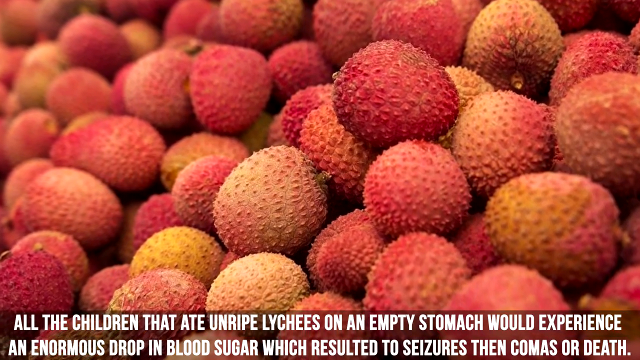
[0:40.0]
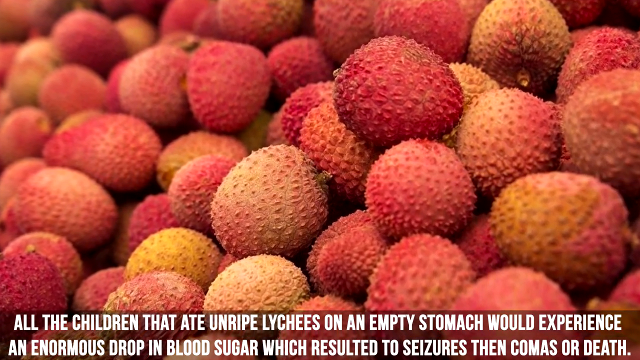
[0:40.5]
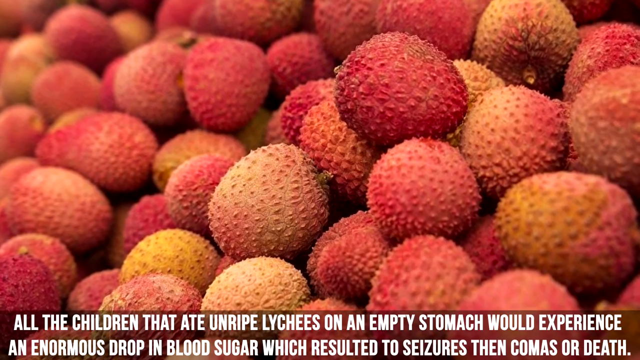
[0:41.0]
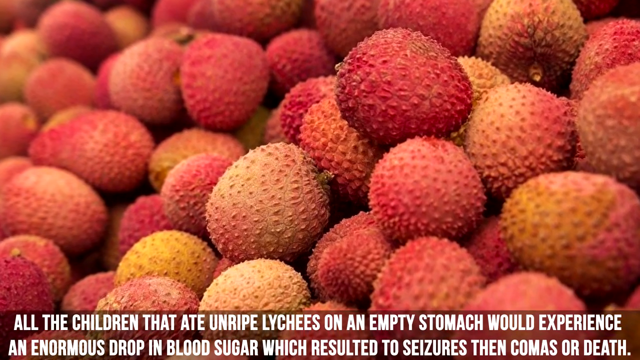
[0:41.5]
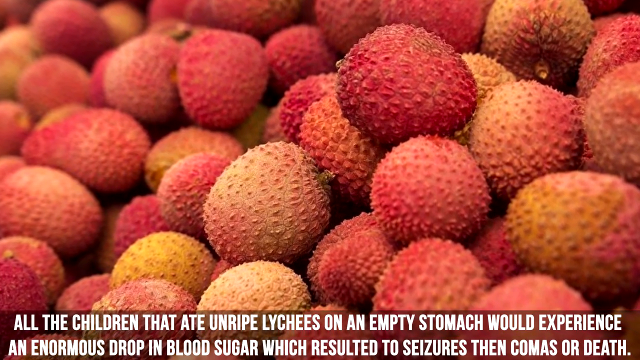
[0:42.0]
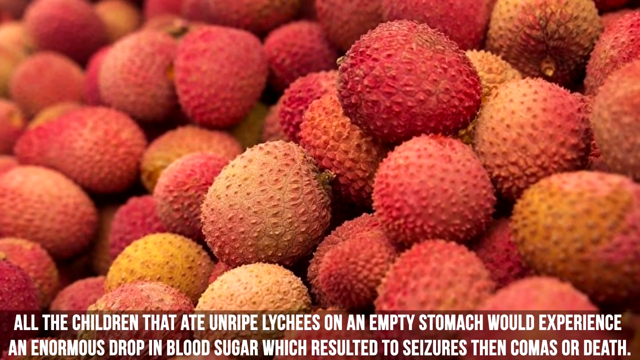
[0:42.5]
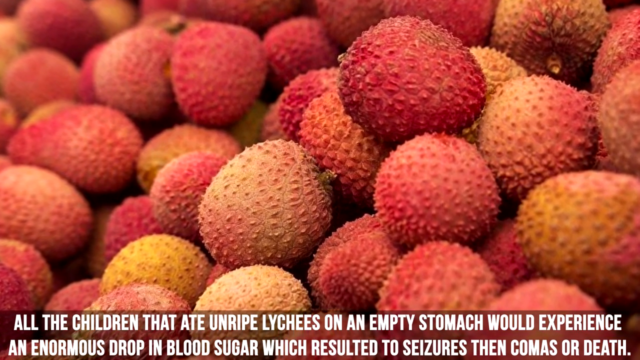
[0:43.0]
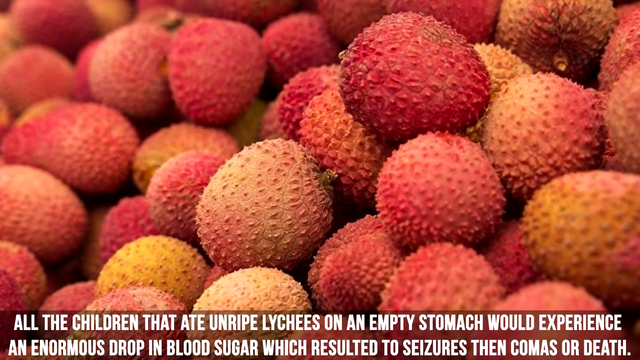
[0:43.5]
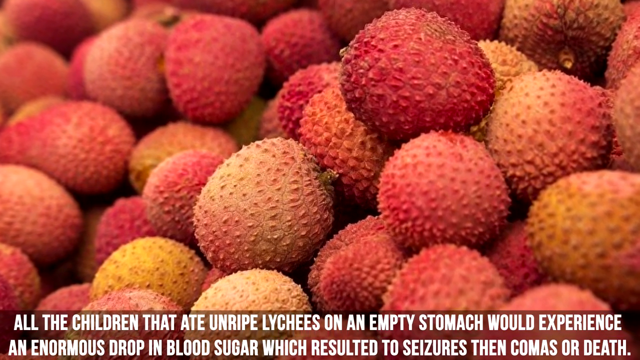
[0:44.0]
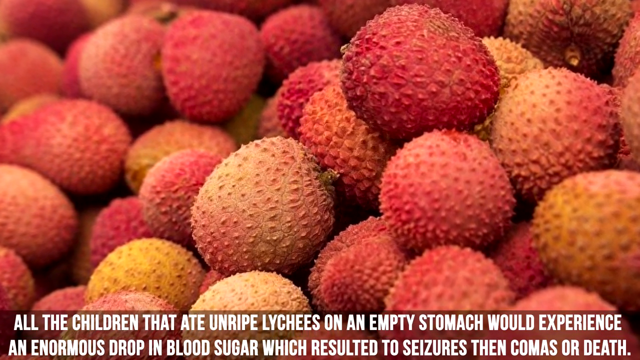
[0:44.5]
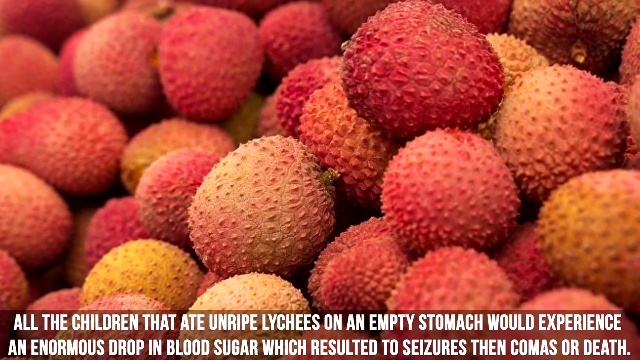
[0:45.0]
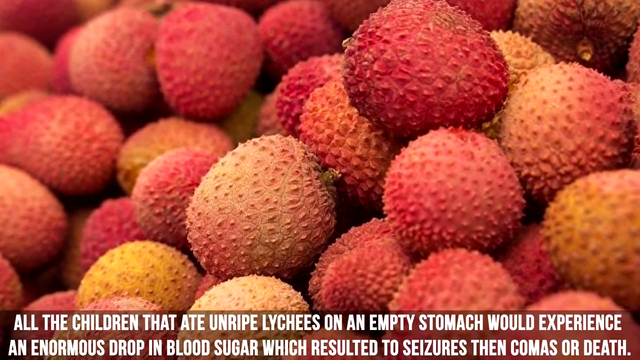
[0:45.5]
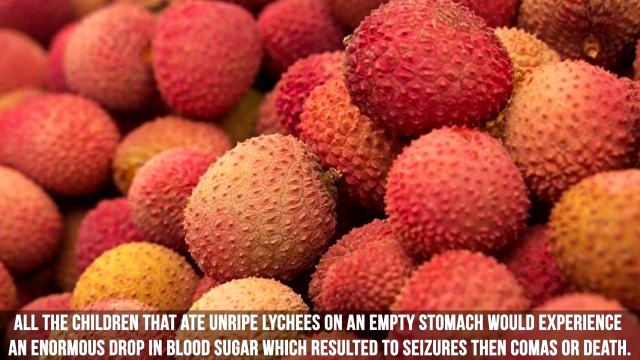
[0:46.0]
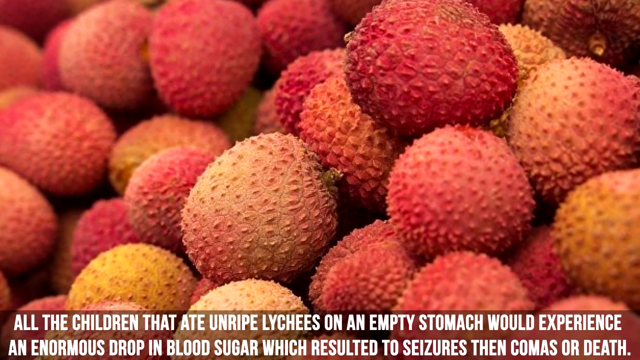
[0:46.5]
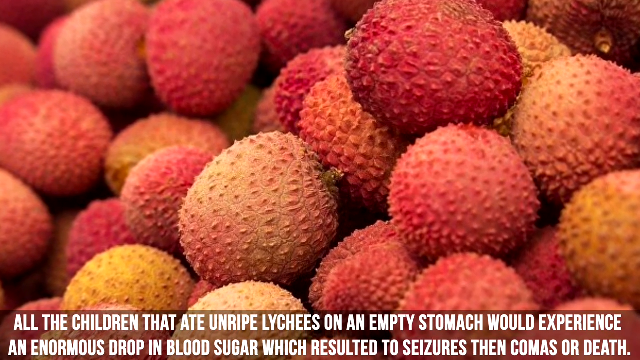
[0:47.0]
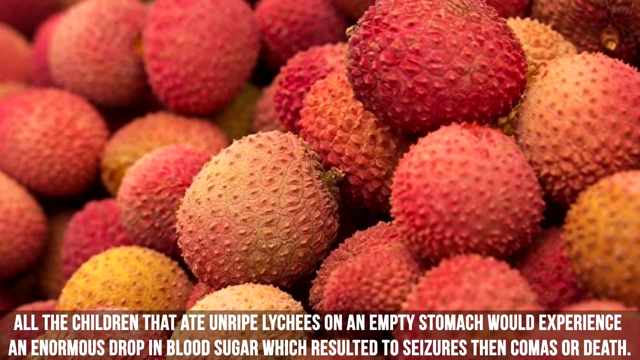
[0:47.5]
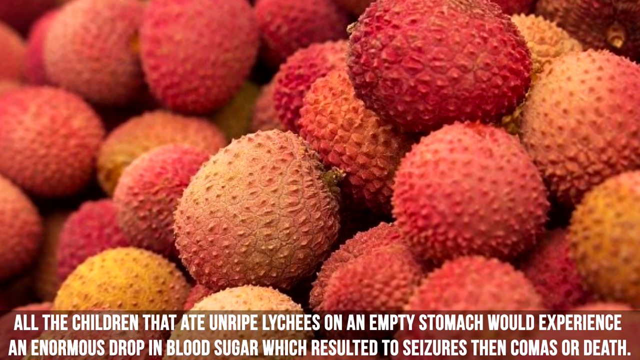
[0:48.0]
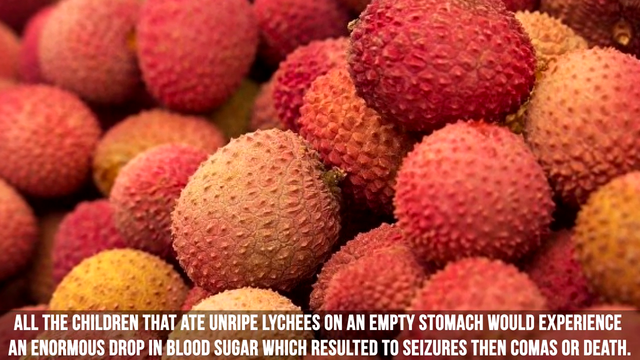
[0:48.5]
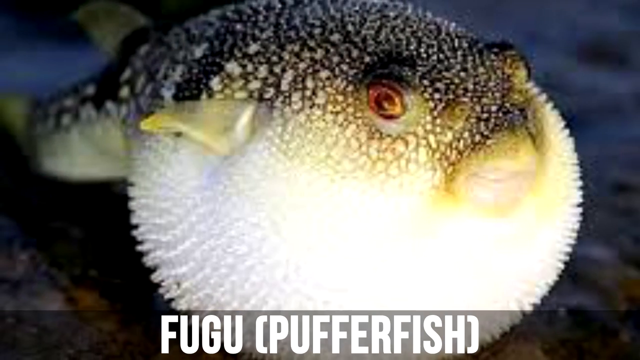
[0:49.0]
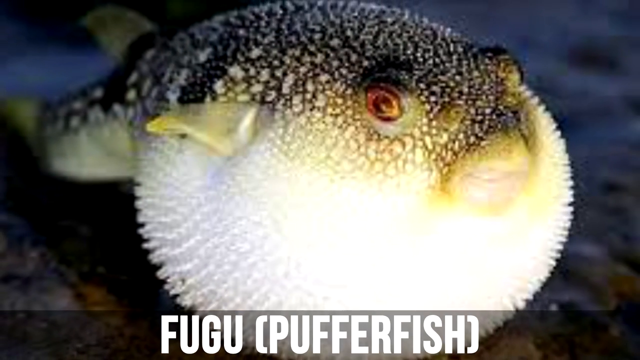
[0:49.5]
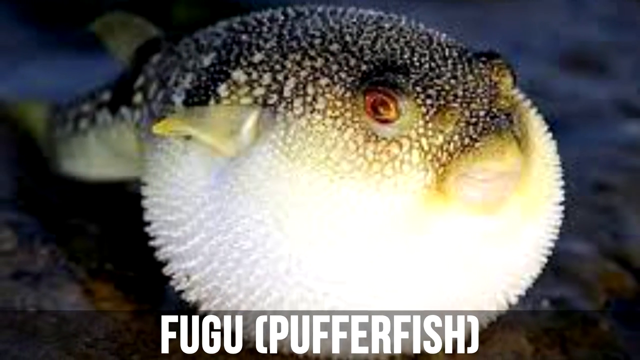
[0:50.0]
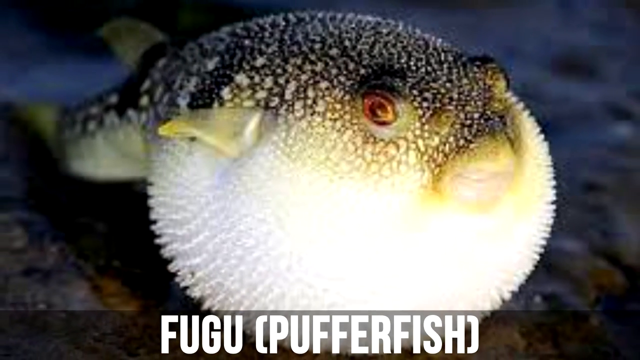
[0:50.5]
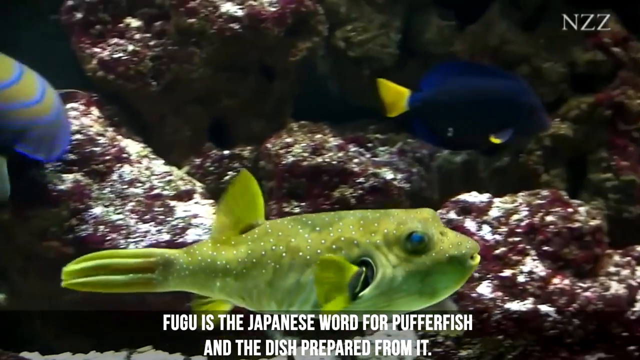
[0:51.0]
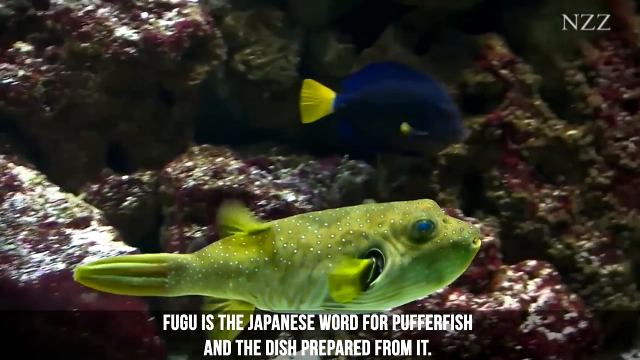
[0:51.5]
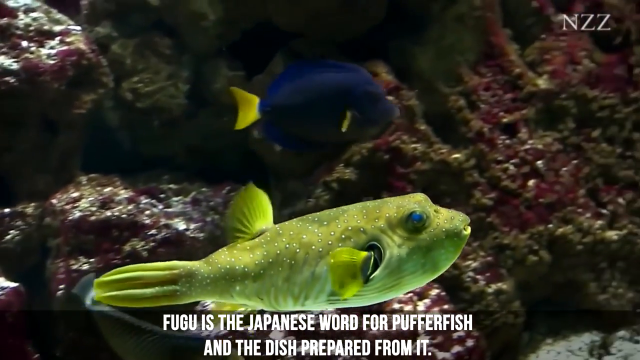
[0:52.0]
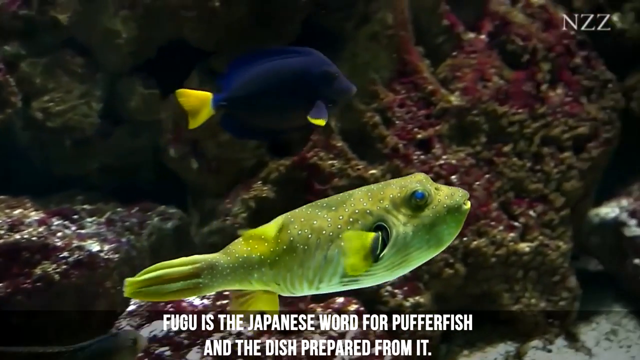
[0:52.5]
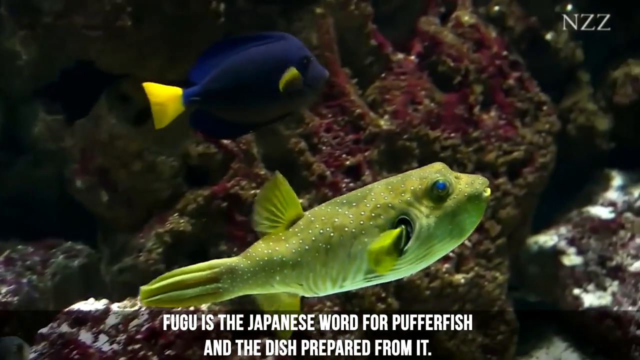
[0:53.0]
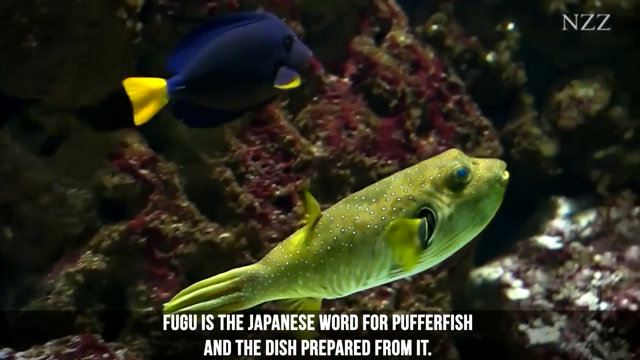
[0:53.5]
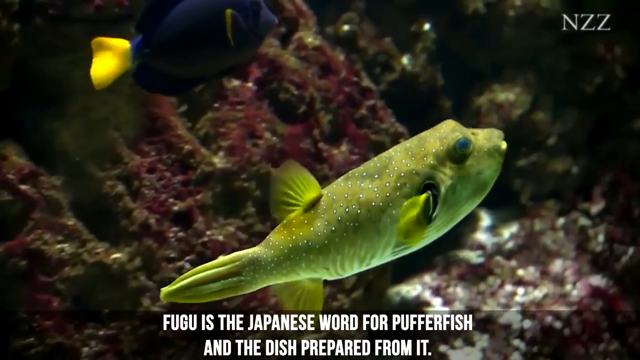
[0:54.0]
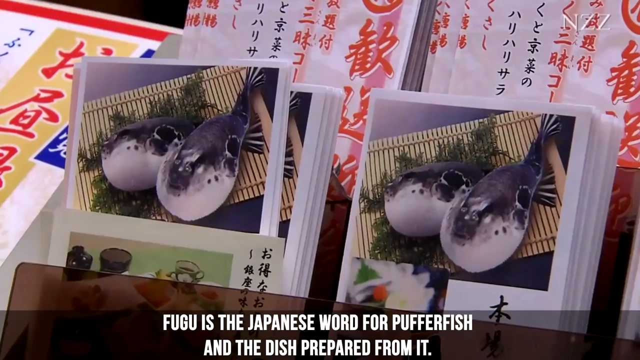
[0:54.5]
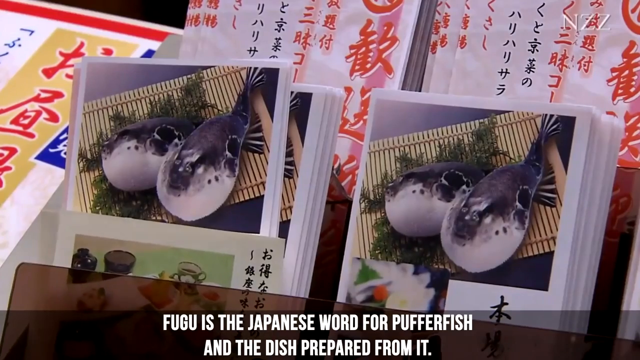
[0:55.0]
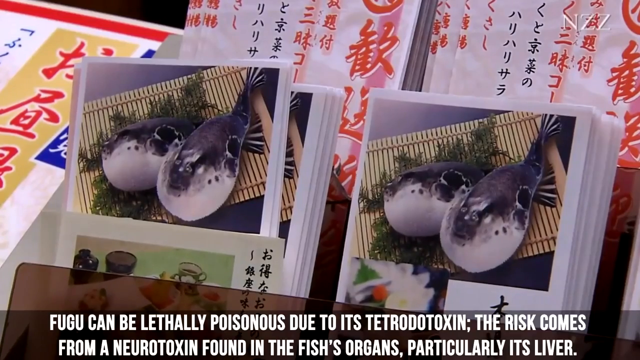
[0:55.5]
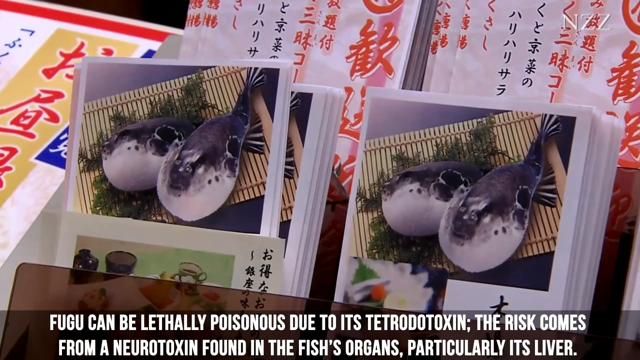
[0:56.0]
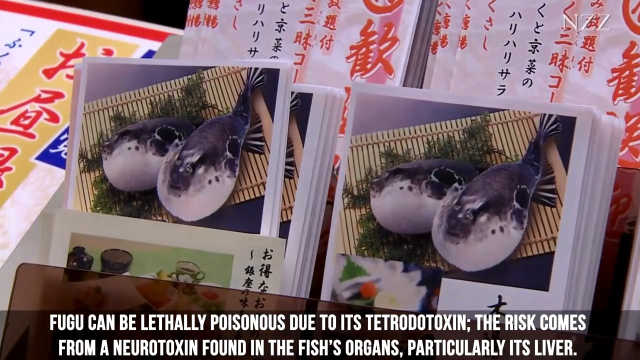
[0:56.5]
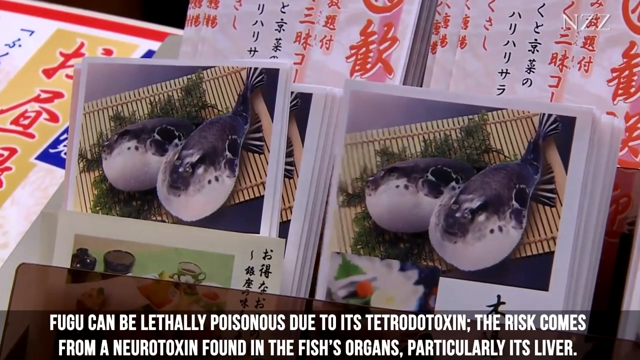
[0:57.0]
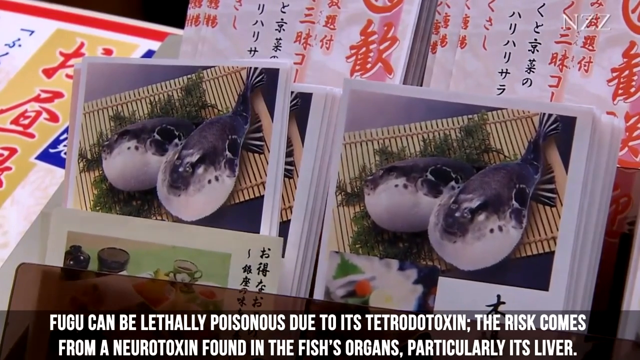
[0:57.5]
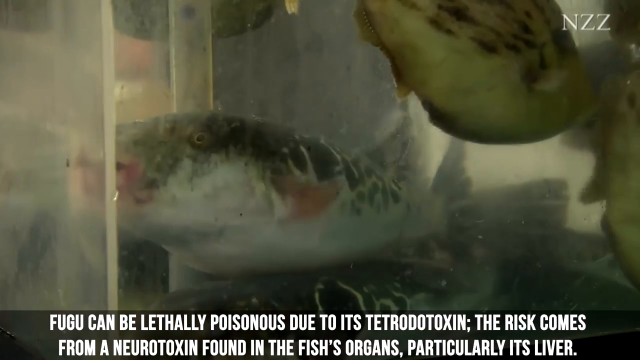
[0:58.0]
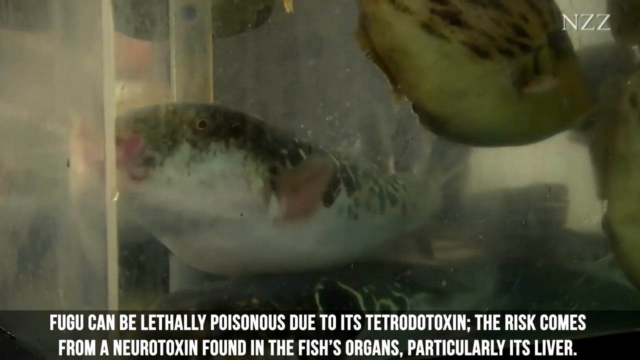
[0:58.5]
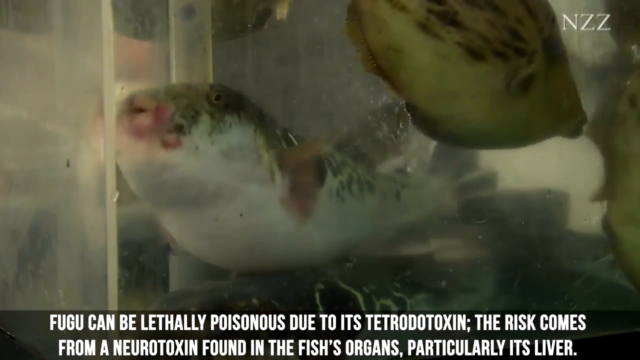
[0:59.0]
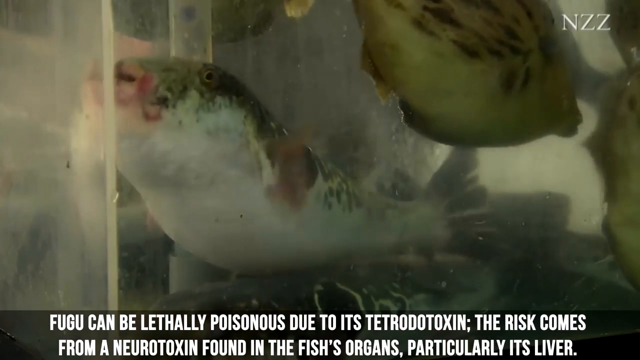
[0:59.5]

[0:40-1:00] An image shows lychee fruit sitting in a big pile, with the caption "all the children that ate unripe lychee on an empty stomach would experience an enormous drop in blood sugar which resulted to seizures, then comas, or deaths." The video then moves on to a fish called the fugu, which the text apparently describes as a Japanese word for puffer fish. It goes on to say that something in the fish's organs can be very harmful and poisonous to humans, a neurotoxin that causes poisoning in humans.